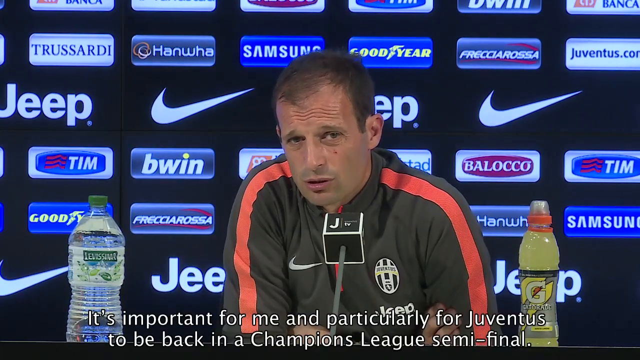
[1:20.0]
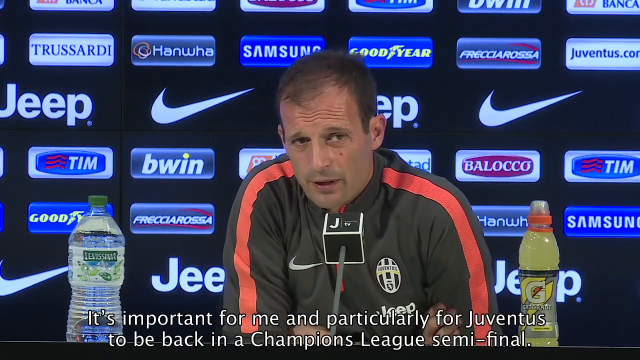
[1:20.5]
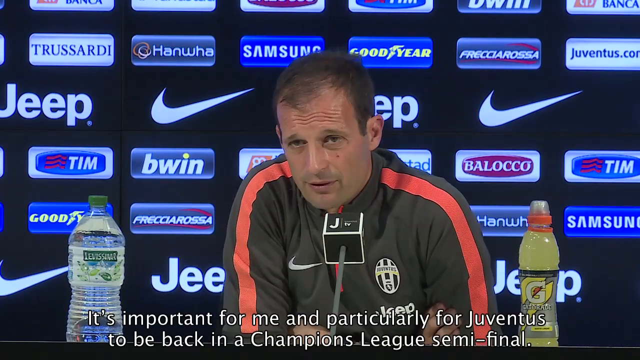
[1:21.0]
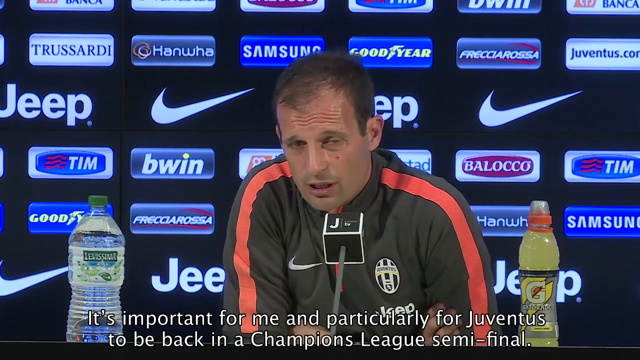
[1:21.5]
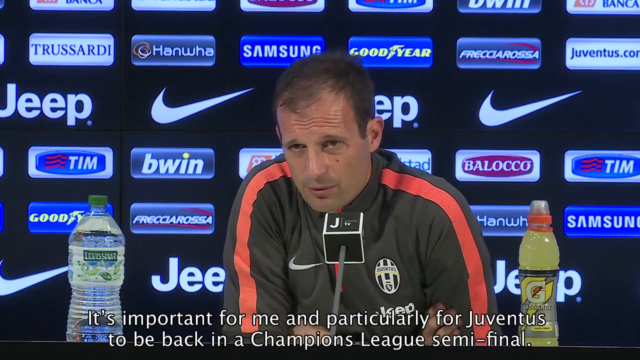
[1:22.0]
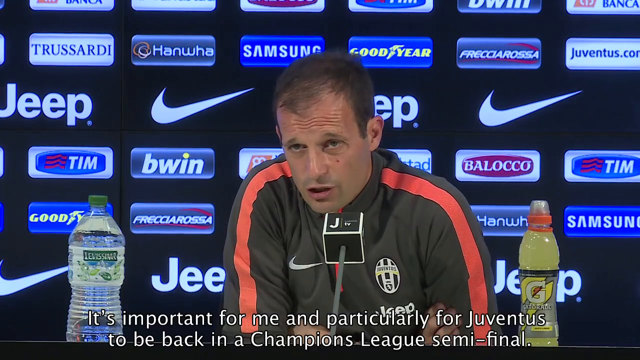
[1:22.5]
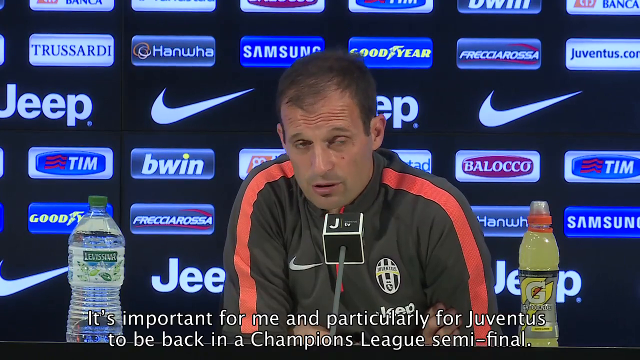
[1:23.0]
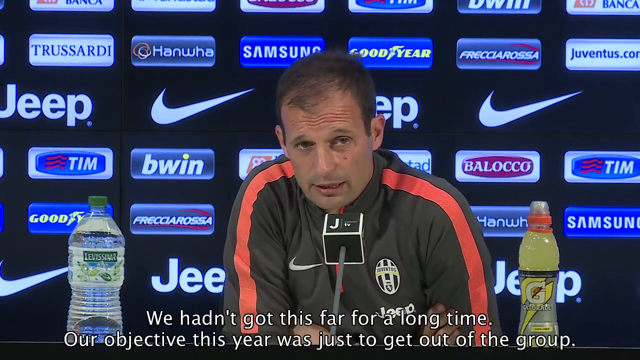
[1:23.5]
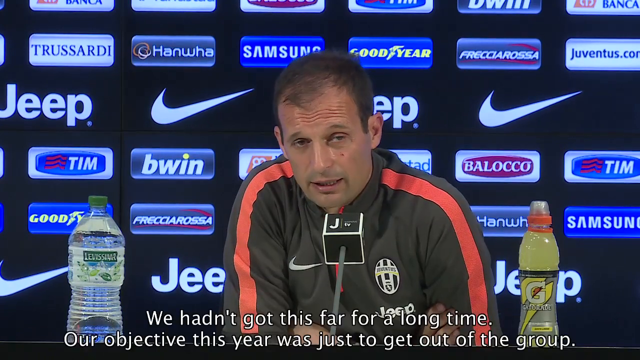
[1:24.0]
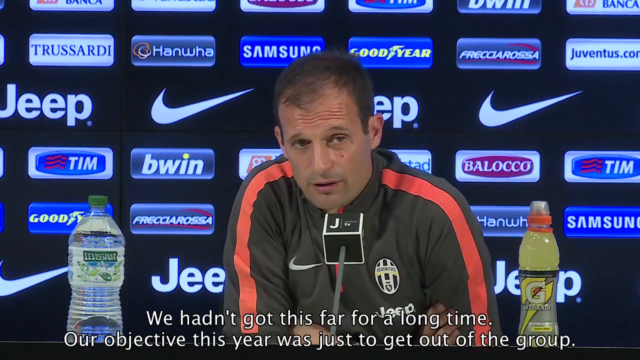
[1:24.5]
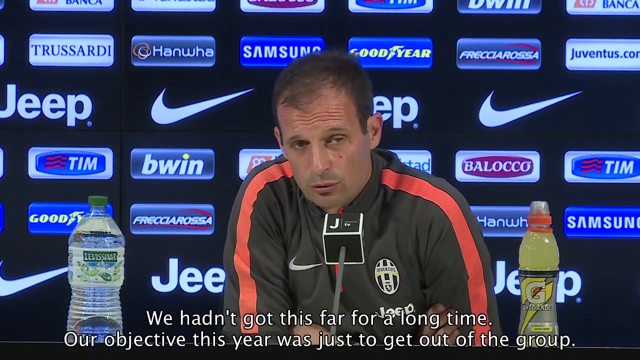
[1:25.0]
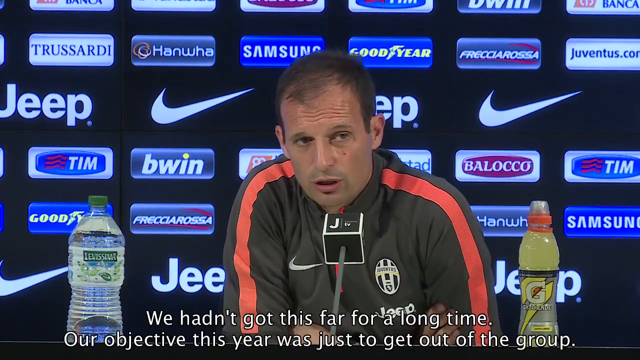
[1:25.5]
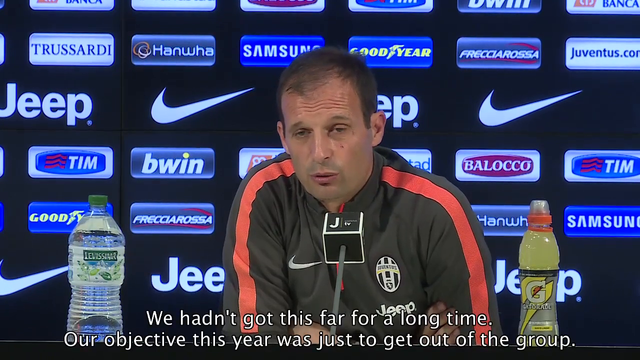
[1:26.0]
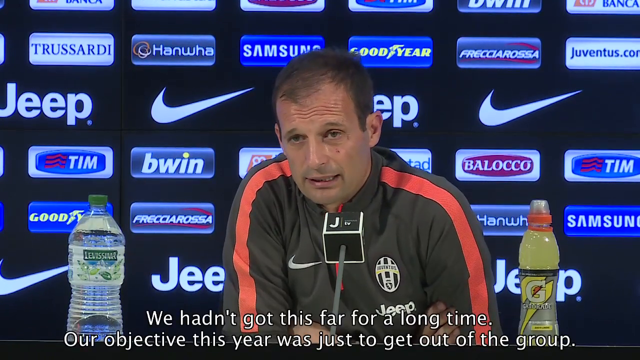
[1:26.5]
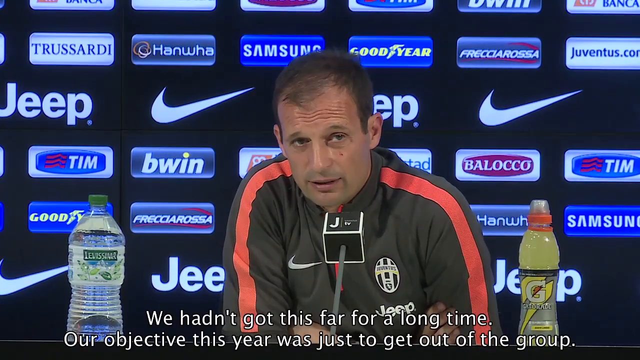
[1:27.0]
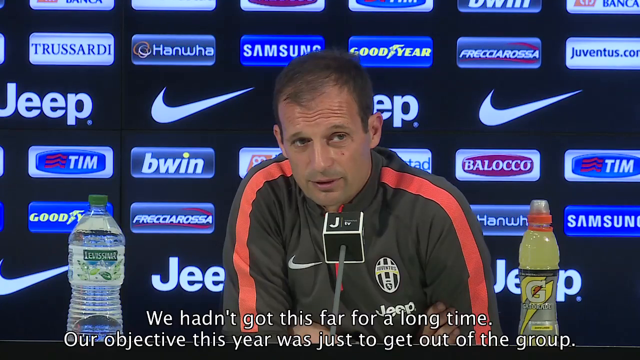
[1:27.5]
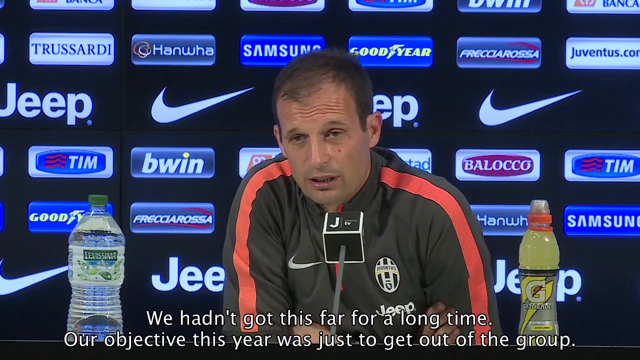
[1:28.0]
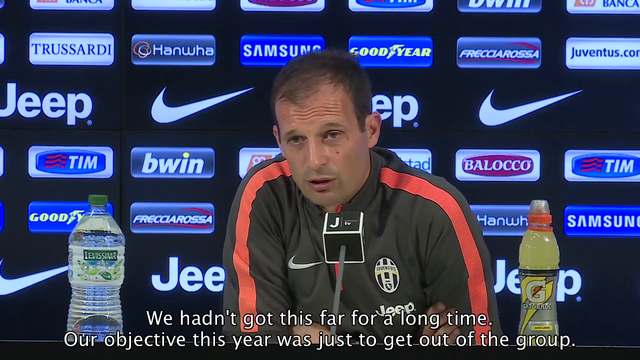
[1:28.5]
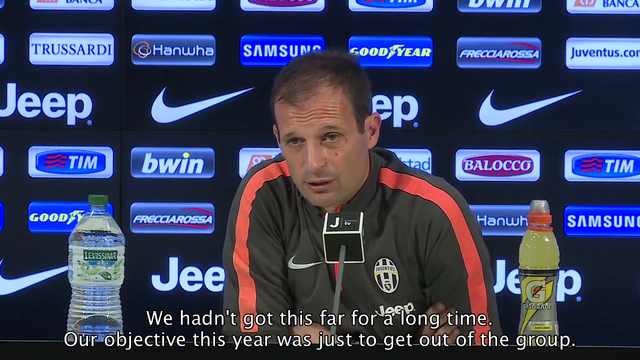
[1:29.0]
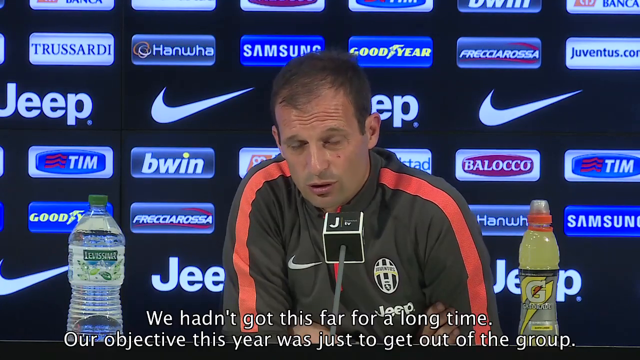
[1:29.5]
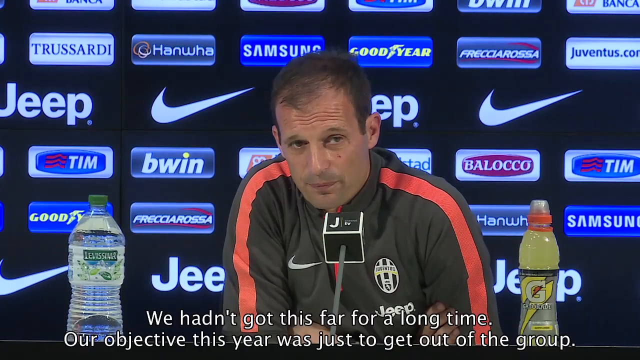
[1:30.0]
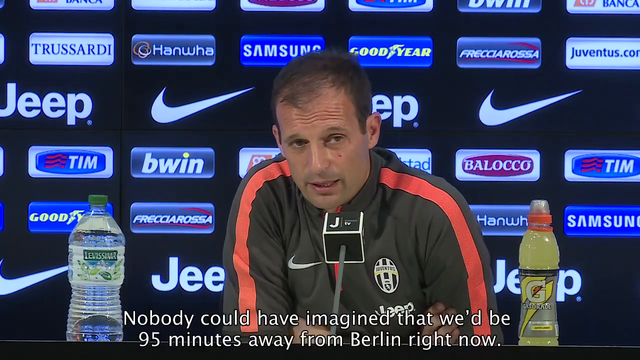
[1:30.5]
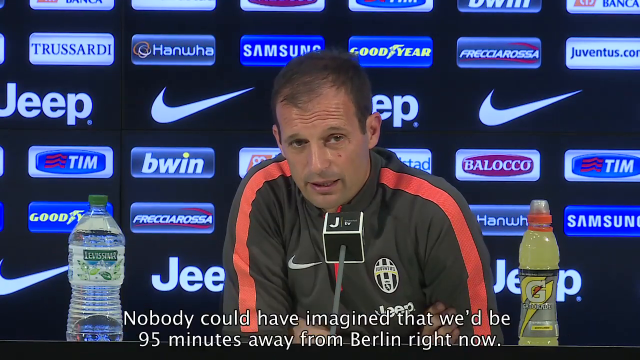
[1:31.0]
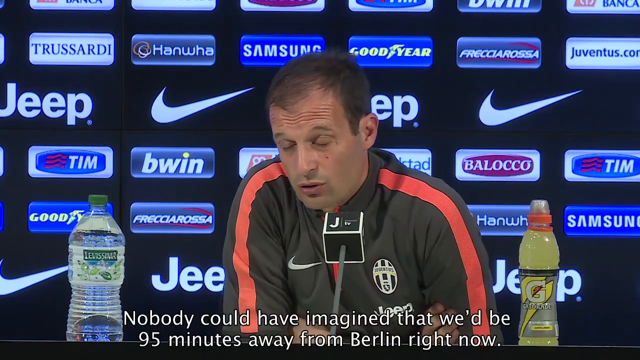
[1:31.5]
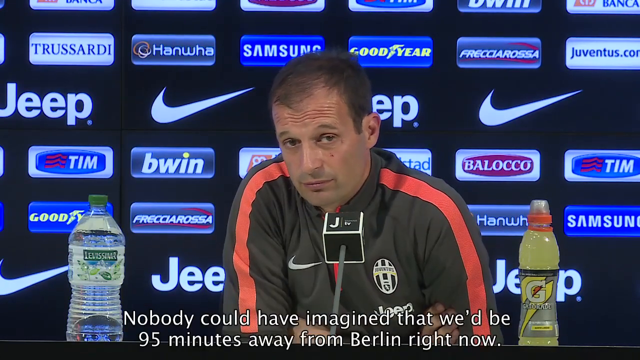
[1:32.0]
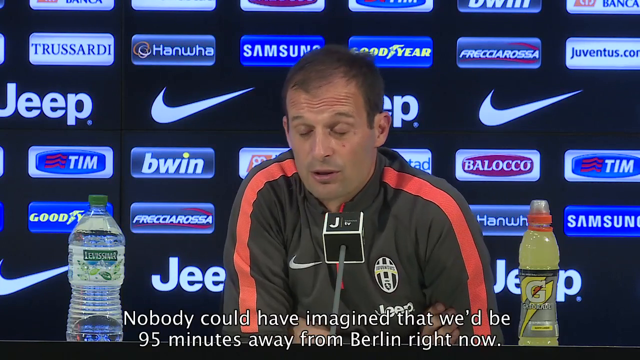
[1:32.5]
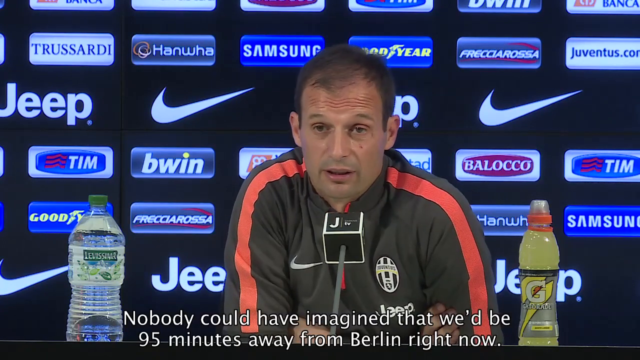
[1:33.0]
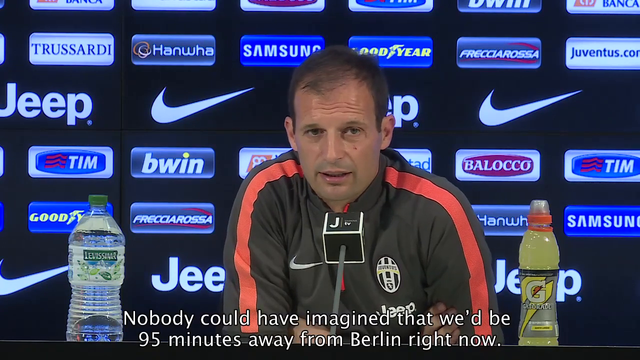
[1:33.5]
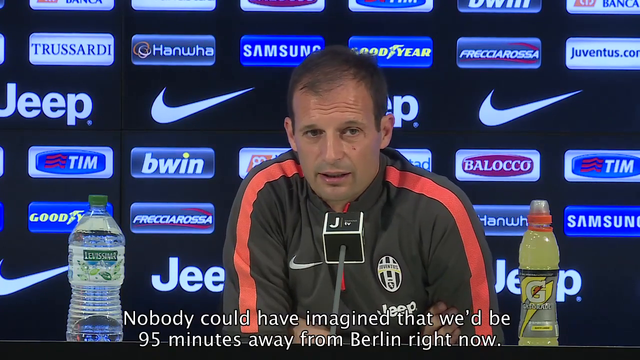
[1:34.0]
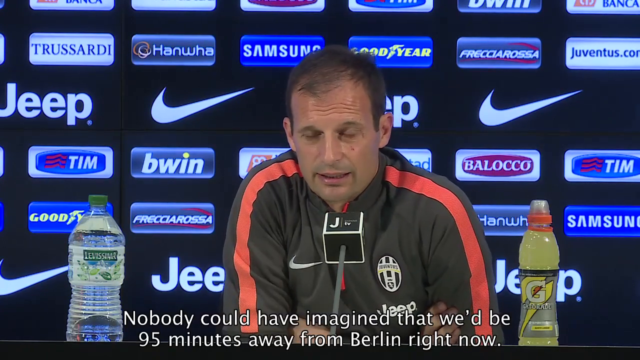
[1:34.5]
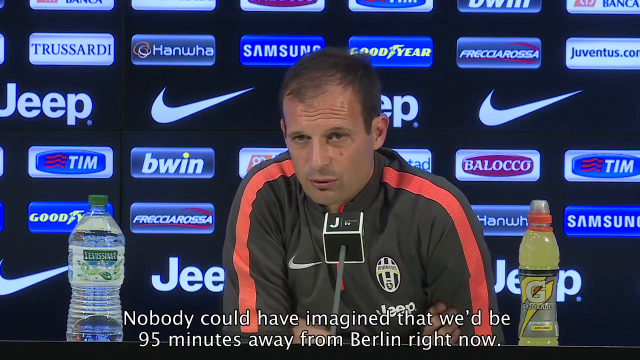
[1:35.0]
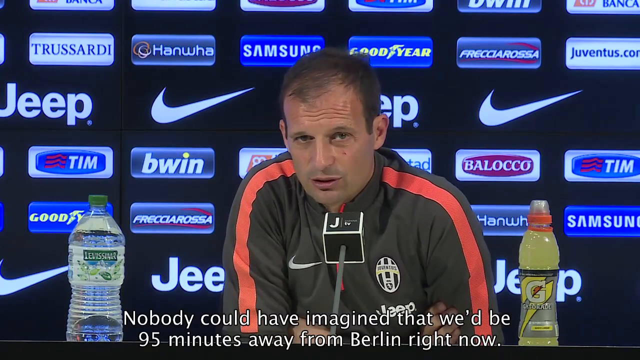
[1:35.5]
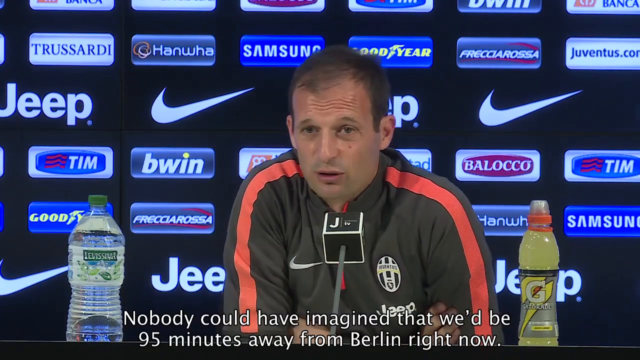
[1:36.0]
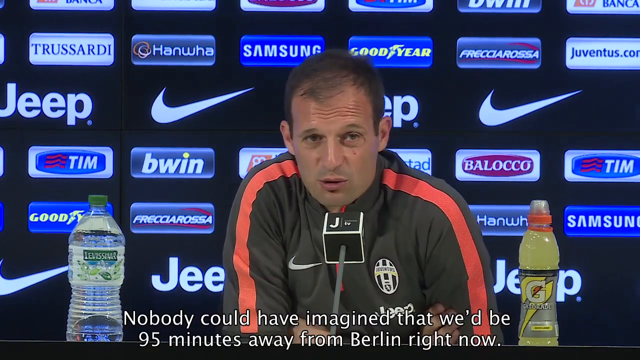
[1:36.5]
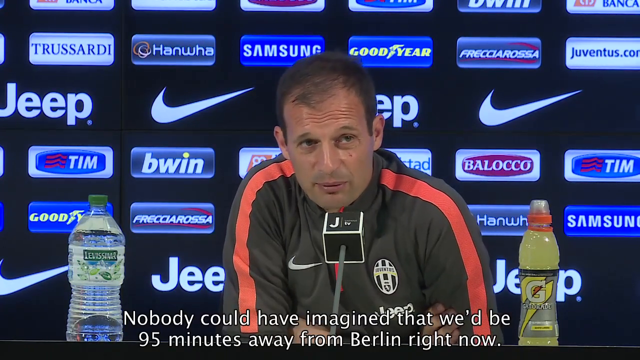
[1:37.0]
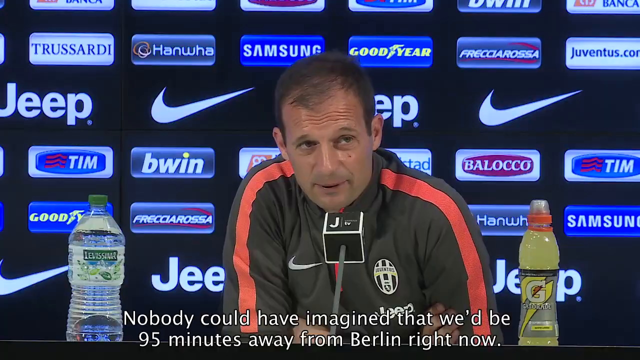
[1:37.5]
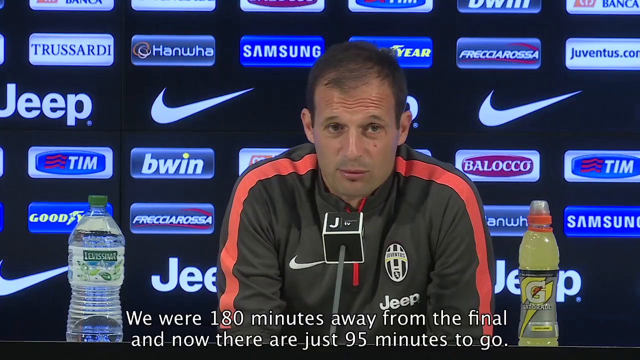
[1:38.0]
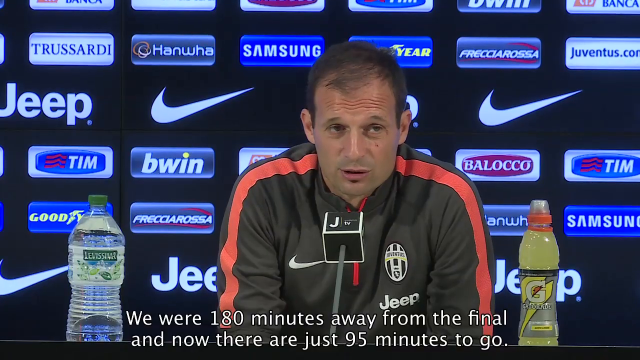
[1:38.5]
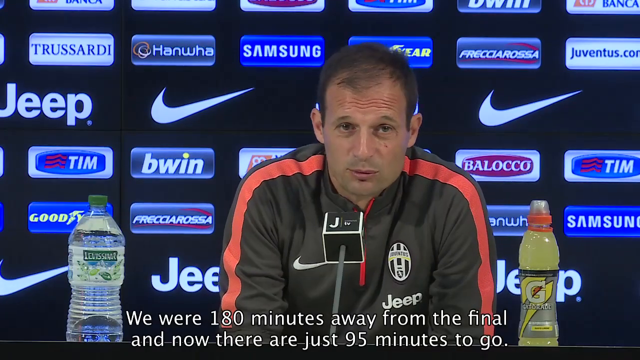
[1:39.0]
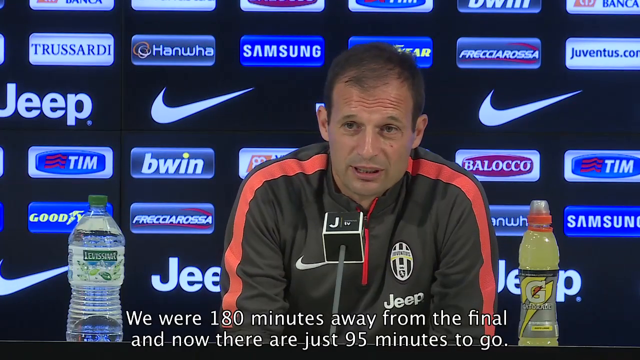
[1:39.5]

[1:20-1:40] To the right of Tim is a blue tab with the white letters "BWIN," the dot on the I in yellow. On the second line of sponsors from the top is a white tab with black capital letters reading "TRUSARDI," and to its right a greyish tab with the word "HANWA." Next come Samsung, then Goodyear, then something reading "FRESHA ROSA," and then "JUVENTUS.com." The text continues: "We hadn't got this far for a long time. Our objective this year was to just get out of the group. Nobody could have imagined that we'd be 95 minutes away from Berlin right now. We were 180 minutes away from the final and now there are just 95 minutes to go."